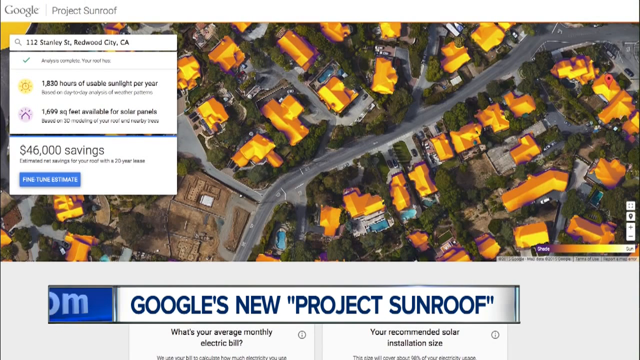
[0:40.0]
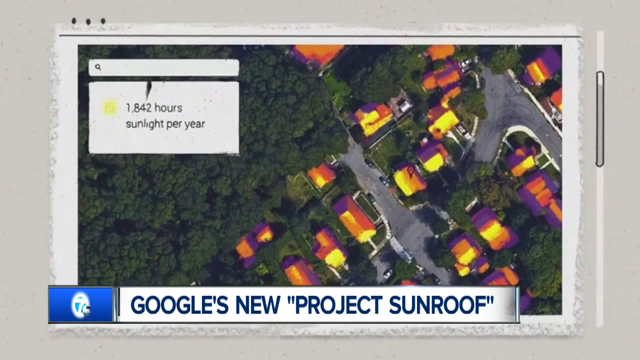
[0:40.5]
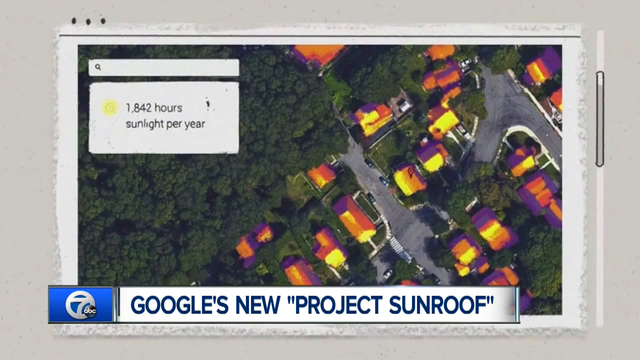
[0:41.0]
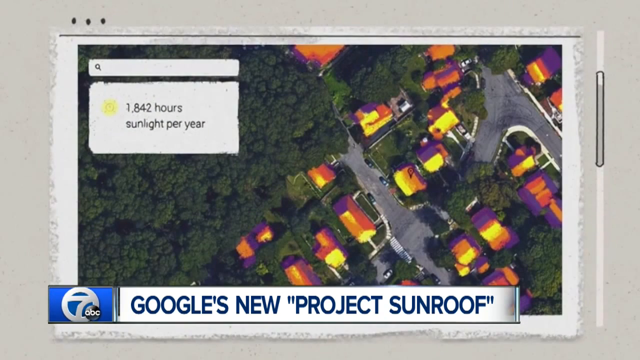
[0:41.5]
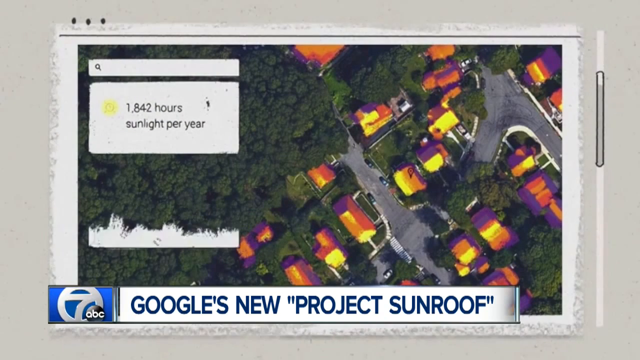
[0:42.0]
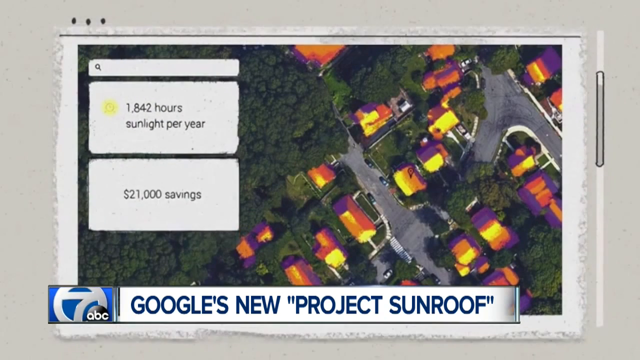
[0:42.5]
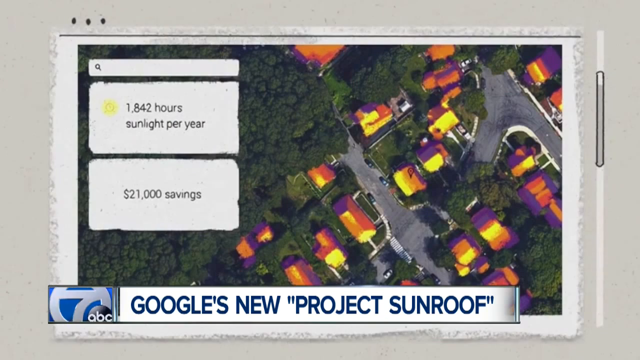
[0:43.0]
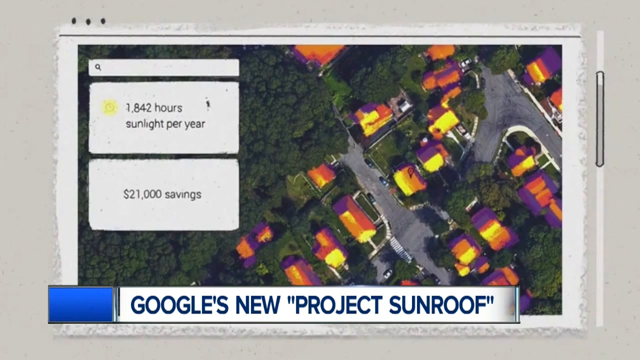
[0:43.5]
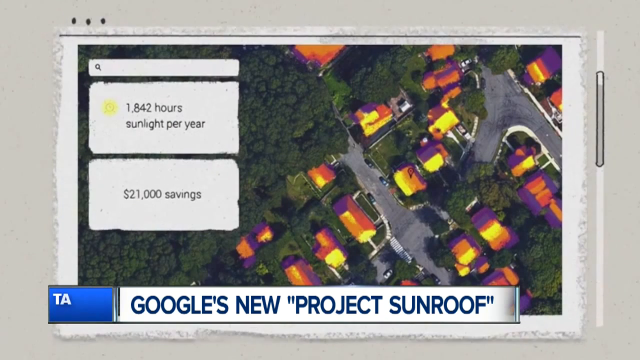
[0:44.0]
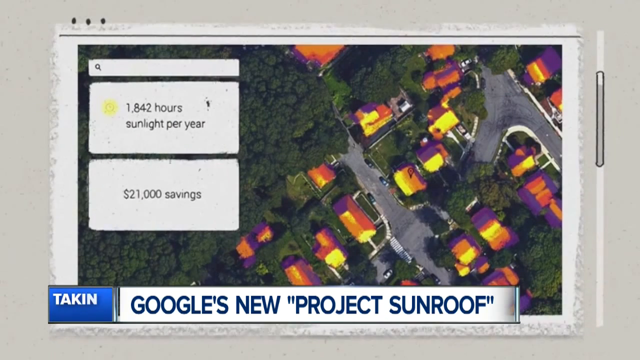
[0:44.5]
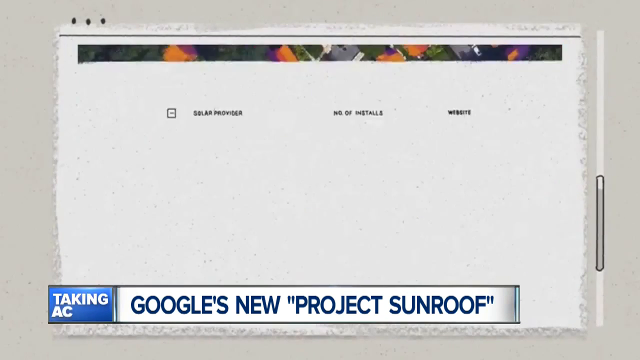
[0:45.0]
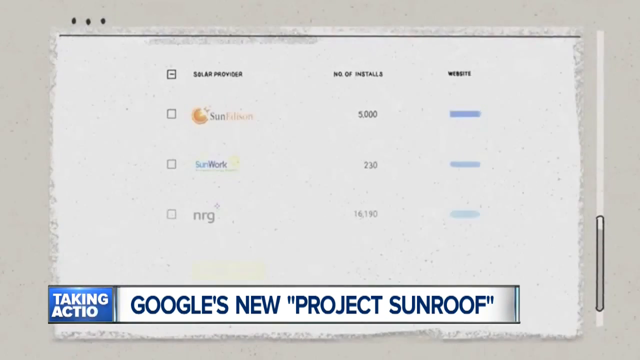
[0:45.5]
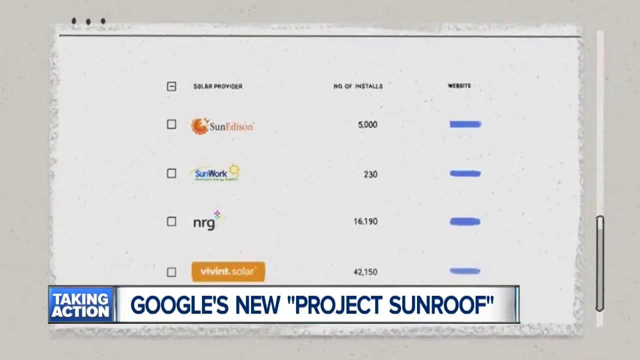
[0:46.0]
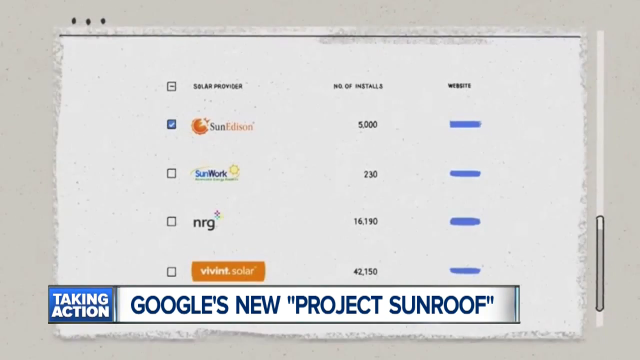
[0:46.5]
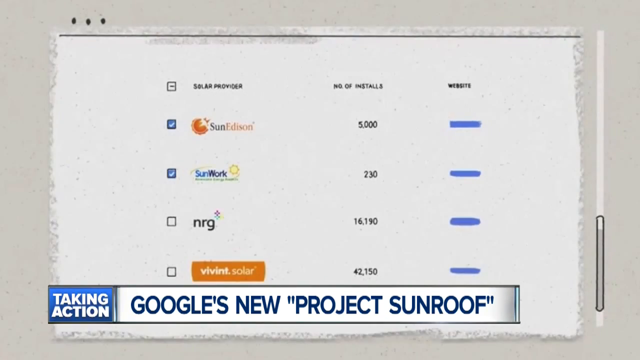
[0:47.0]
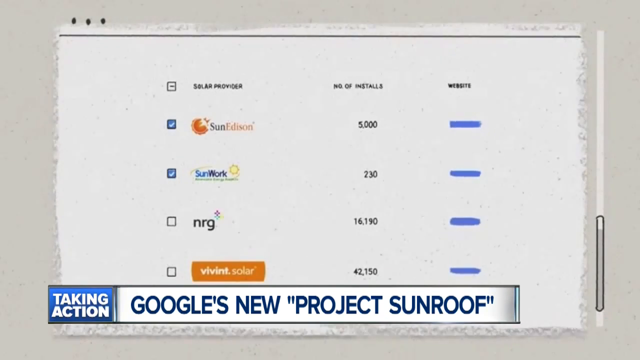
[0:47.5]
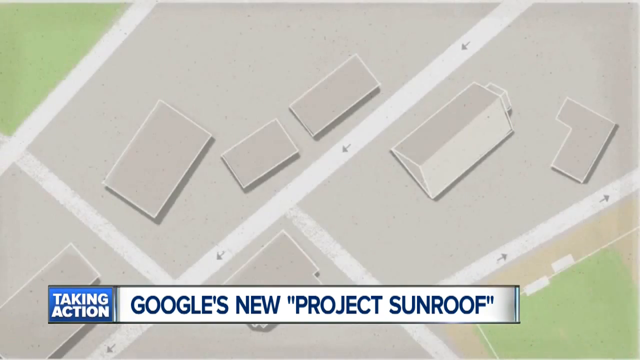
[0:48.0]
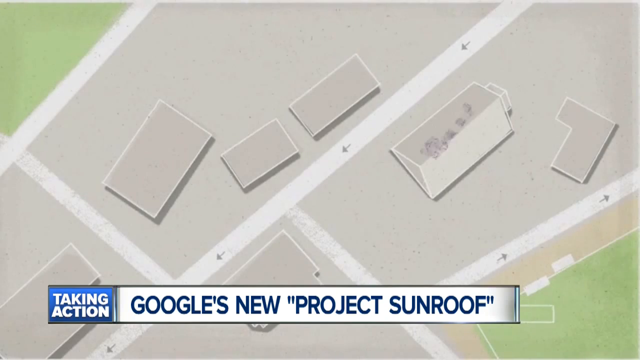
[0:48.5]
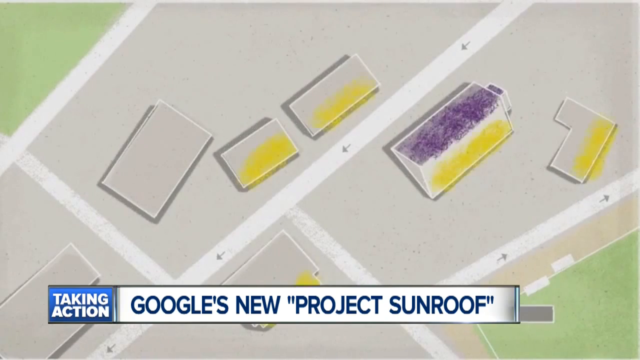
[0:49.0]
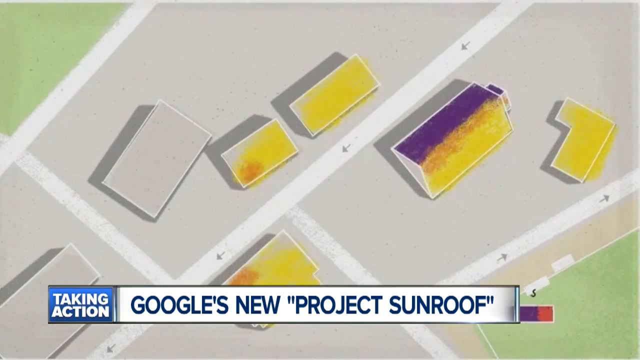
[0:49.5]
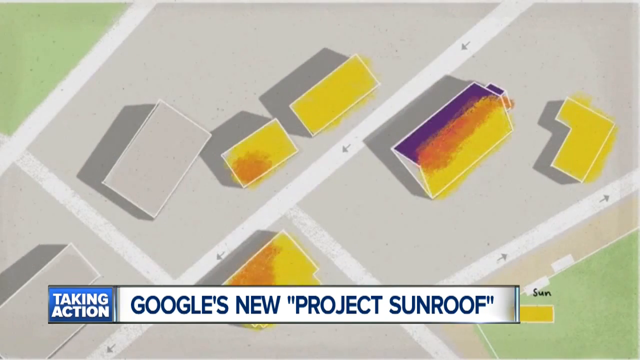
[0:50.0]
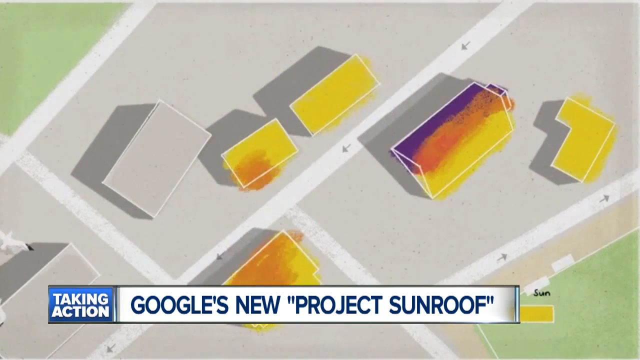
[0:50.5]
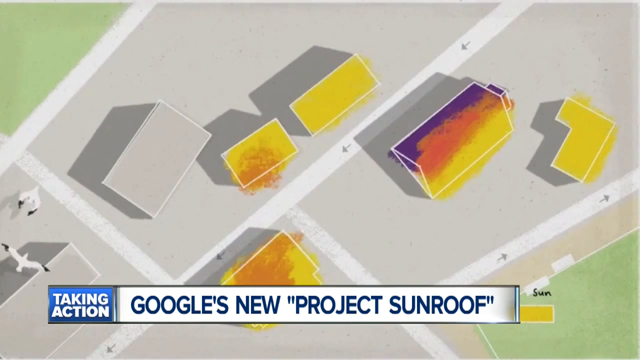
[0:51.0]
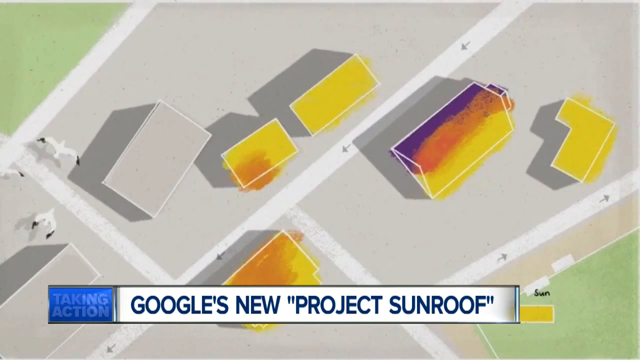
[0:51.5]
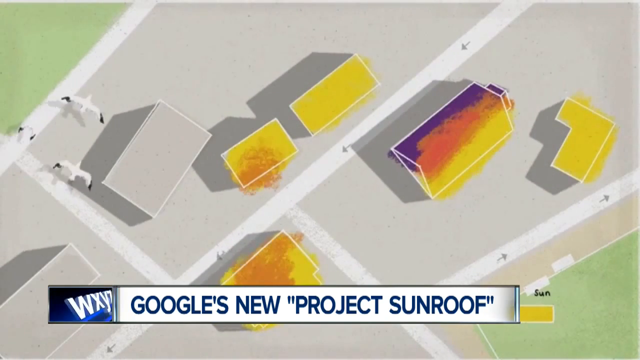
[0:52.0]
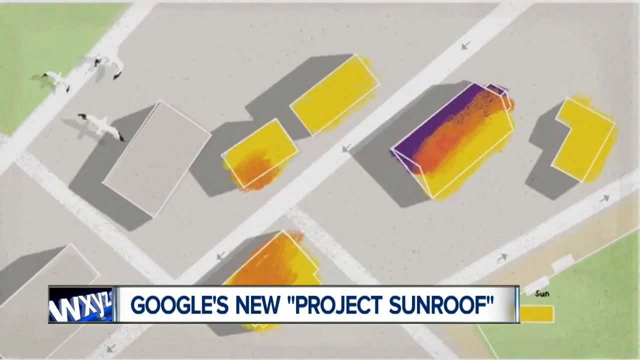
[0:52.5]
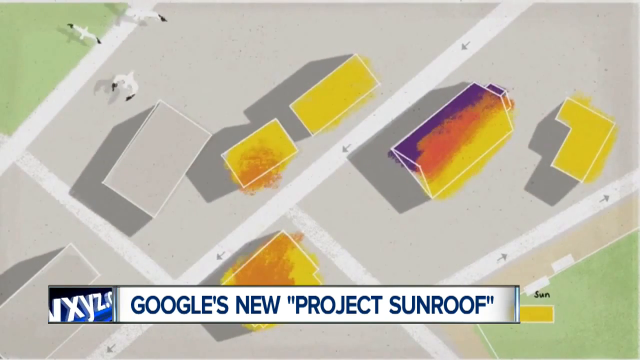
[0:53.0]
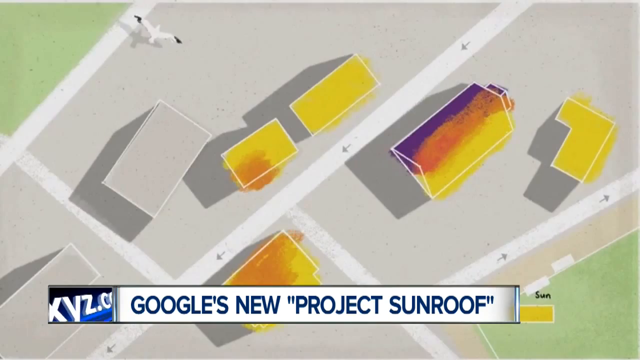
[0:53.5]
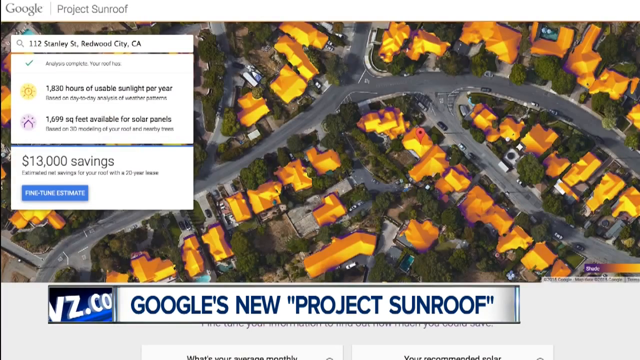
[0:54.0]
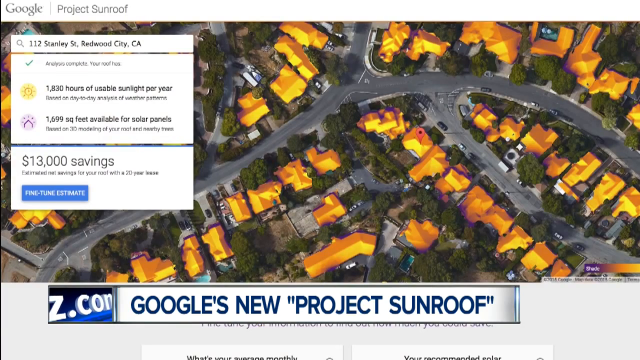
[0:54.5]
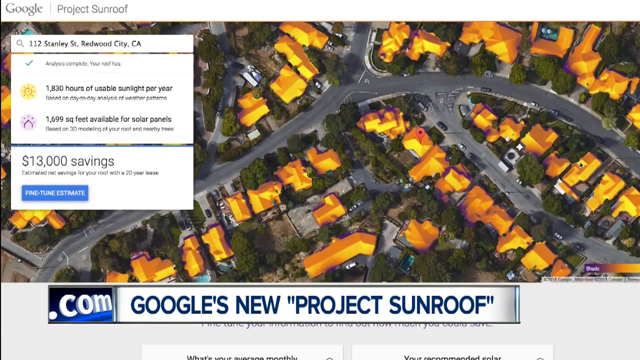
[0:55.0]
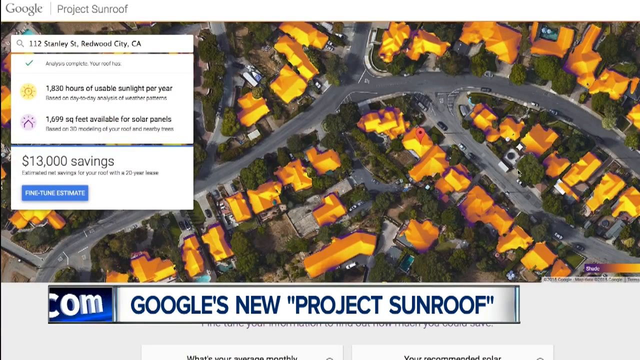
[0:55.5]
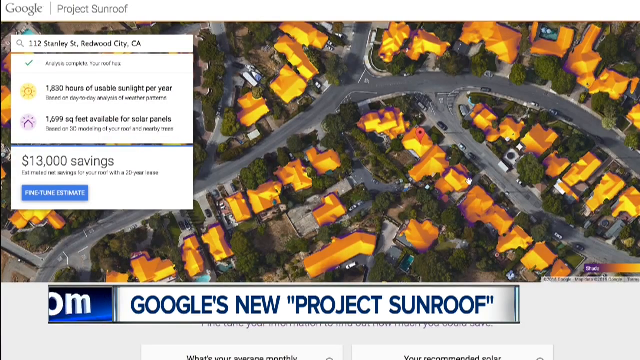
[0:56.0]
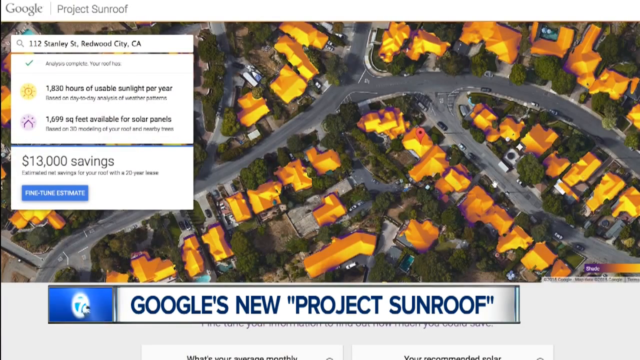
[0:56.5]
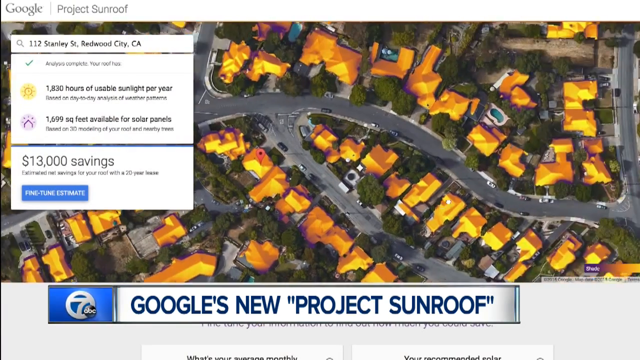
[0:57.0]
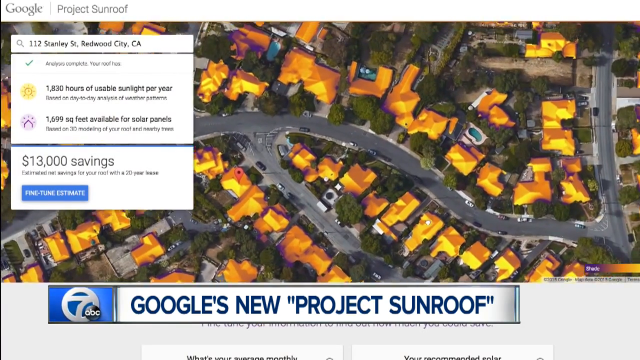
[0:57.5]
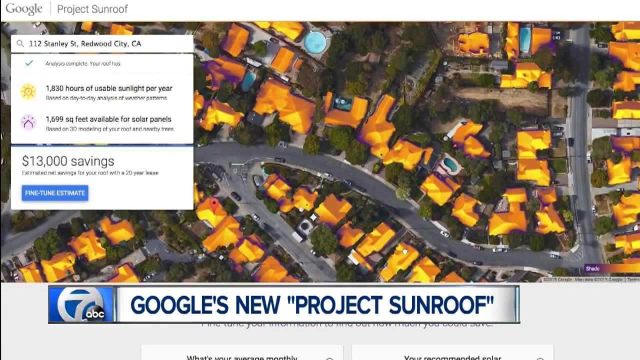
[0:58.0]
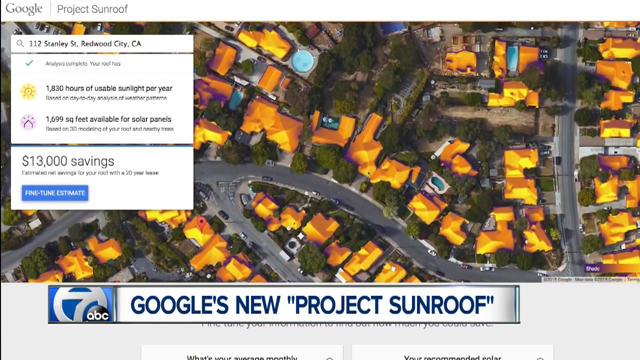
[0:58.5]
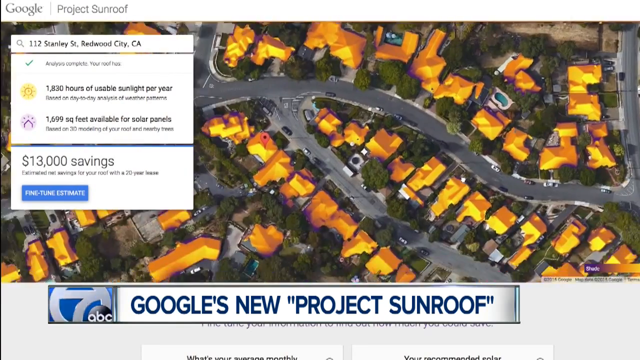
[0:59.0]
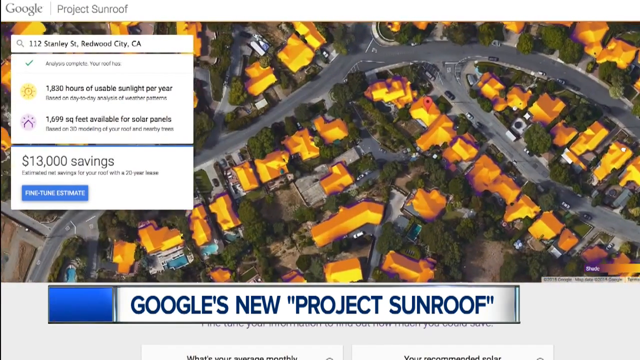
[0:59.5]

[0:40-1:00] The overhead shot of the suburban neighborhood narrows to a smaller area with only a few houses, maybe about a dozen to a dozen and a half, with yellowish-gold roofs, alongside a big chunk of trees and woods. On the far right of the screen, a rectangular box reads "1,842 hours" with "sunlight per year" underneath, in black letters, and a small image of a sun to the right of "1,842 hours". Another white rectangular box pops up below it, reading "21,000 savings" in black letters. The screen scrolls up, and black letters a little to the right of center read "Solar Providers", with a list of providers underneath: SunEdison at the top, then SunWork, then NRG, then Vivint Solar. A second column has a hard-to-make-out header that seems to read "average of installs", with 5,000 beside SunEdison, 230 beside SunWork, 16.190 beside NRG and 42.150 beside Vivint Solar. A third column contains small blue rectangular bars, one in each row after a space following each number. The screen changes to another overhead view in which graphics of houses pop up from nowhere, with what looks like houses and buildings appearing on what looks like a grid, while three white birds with black wingtips fly over the houses on the right of the screen. The view then returns to the overhead shot of the suburb where all the houses have yellowish-gold tops, with blue letters at the bottom reading "Google's new 'Project Sunroof'", with Project Sunroof in quotation marks.